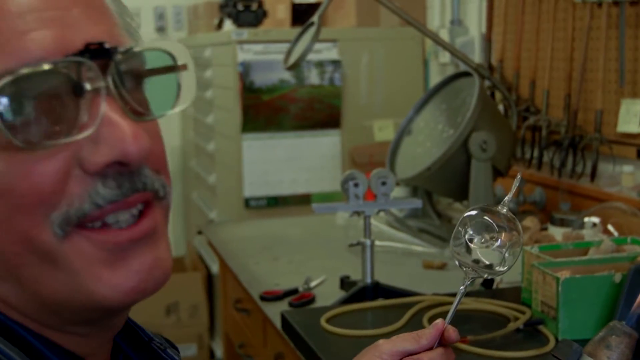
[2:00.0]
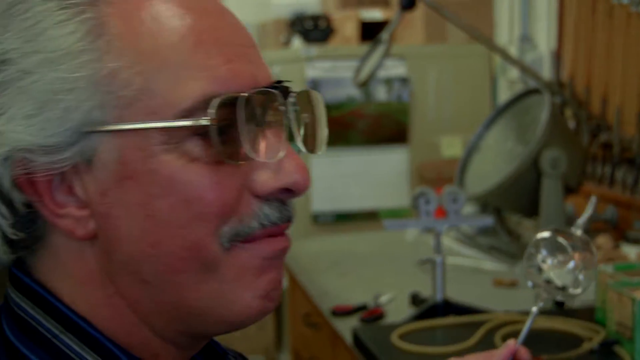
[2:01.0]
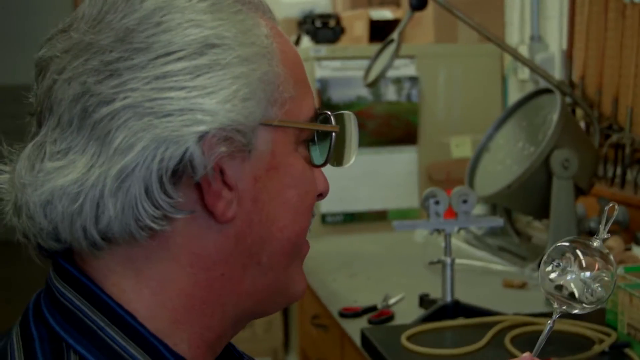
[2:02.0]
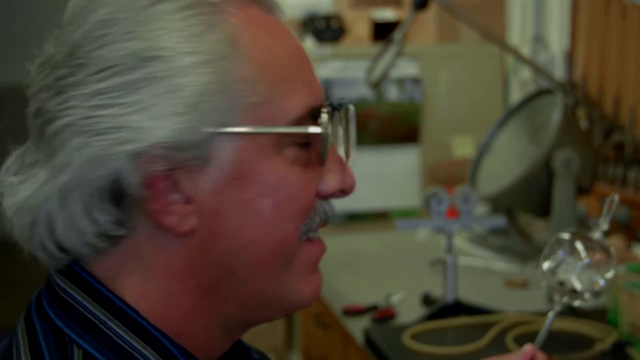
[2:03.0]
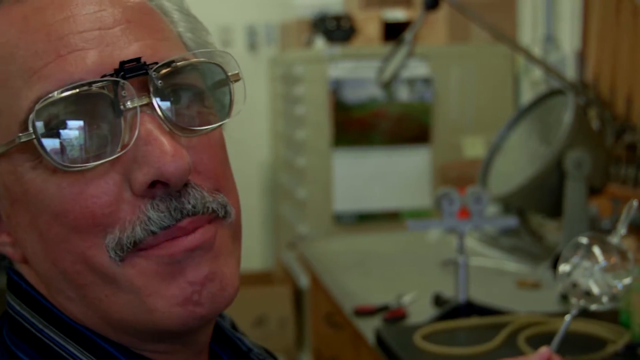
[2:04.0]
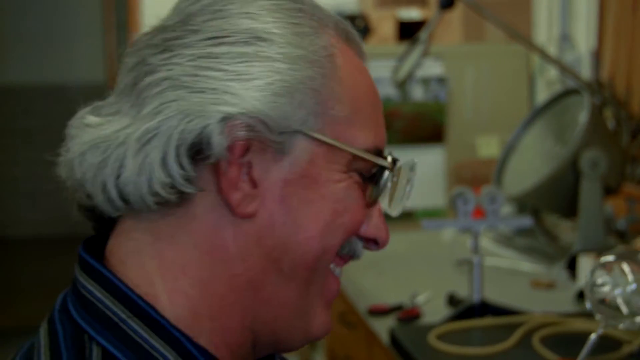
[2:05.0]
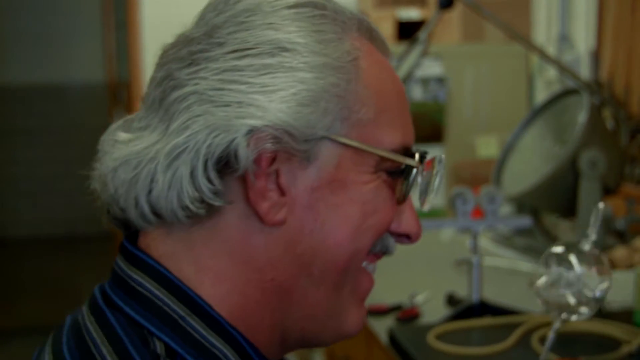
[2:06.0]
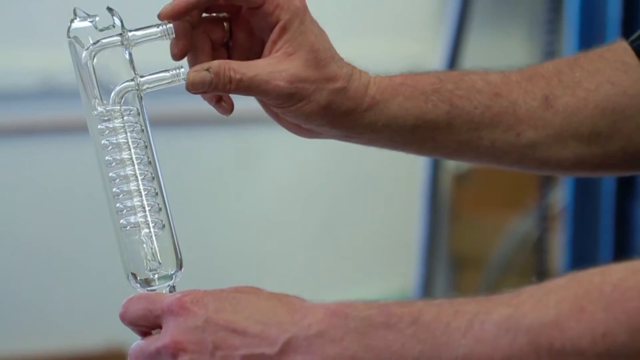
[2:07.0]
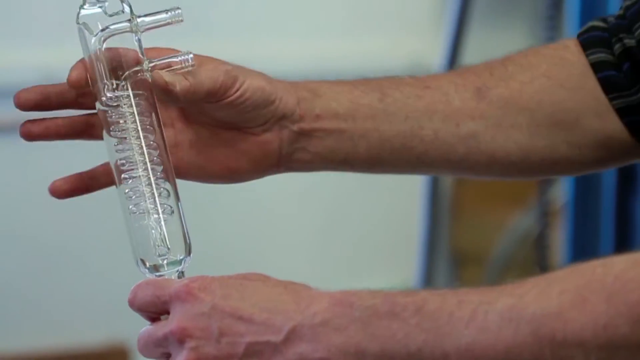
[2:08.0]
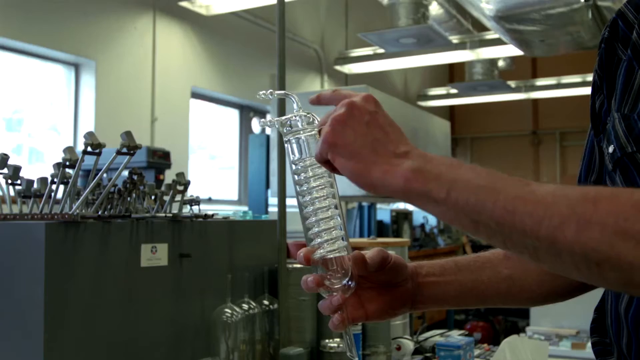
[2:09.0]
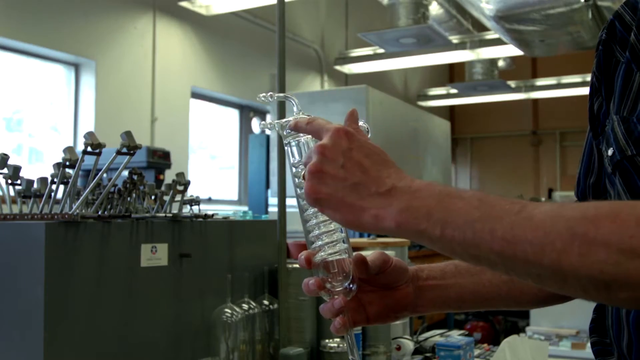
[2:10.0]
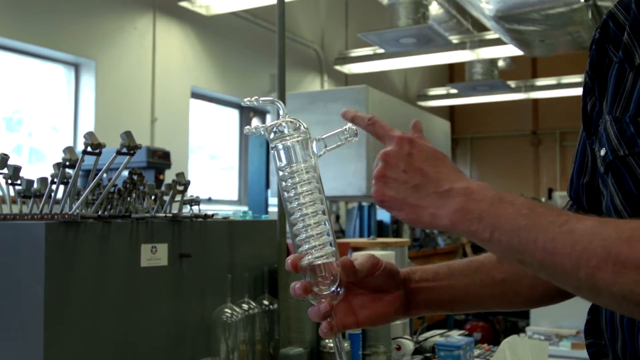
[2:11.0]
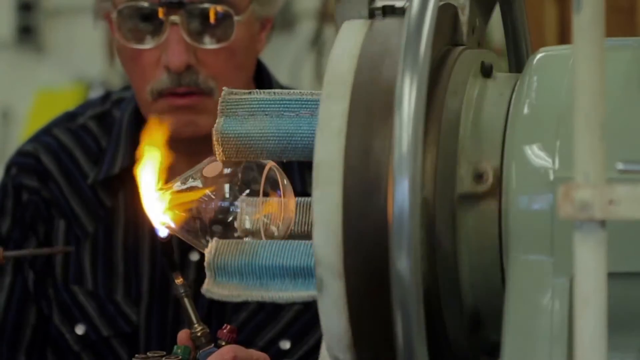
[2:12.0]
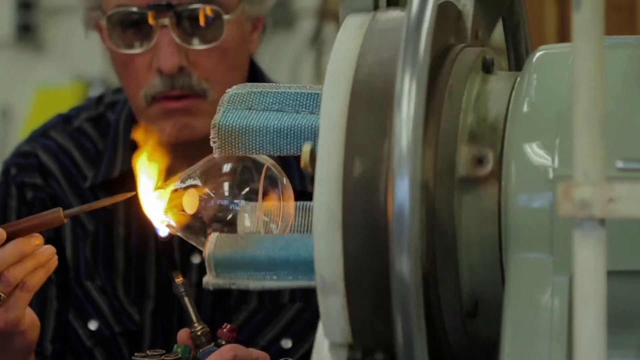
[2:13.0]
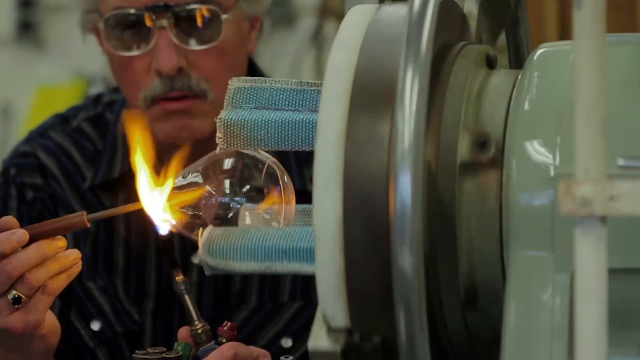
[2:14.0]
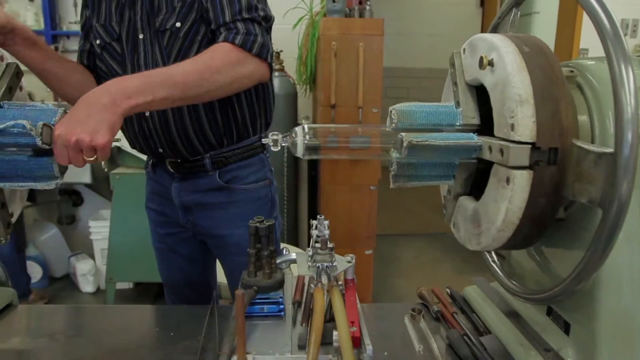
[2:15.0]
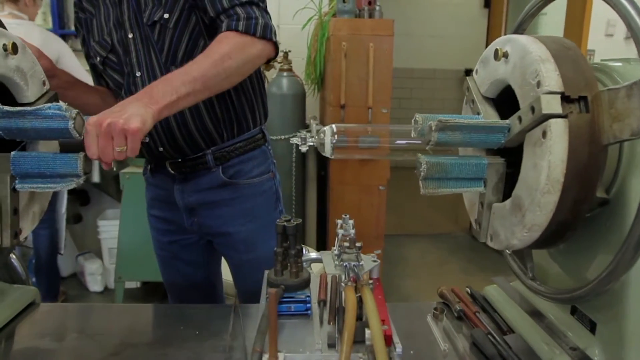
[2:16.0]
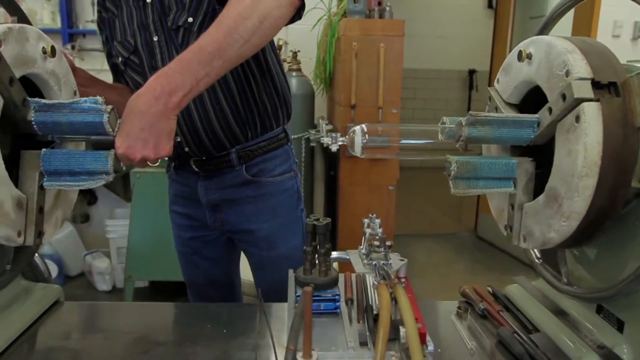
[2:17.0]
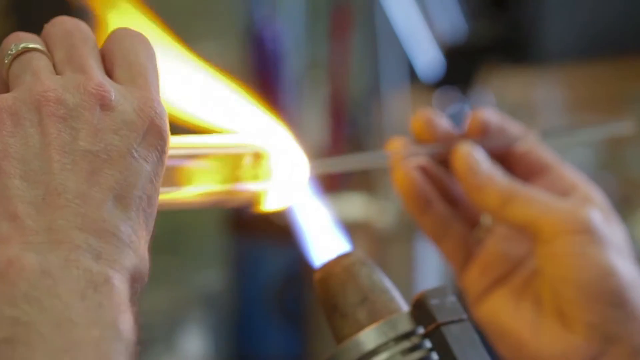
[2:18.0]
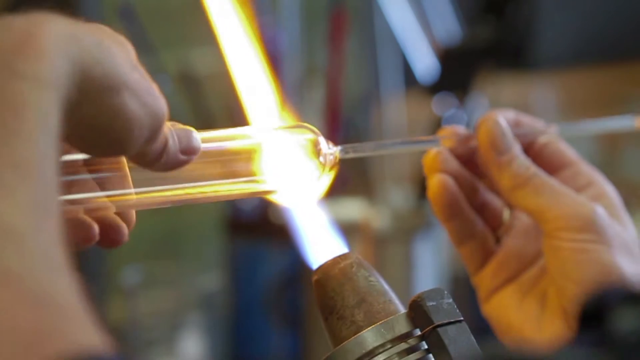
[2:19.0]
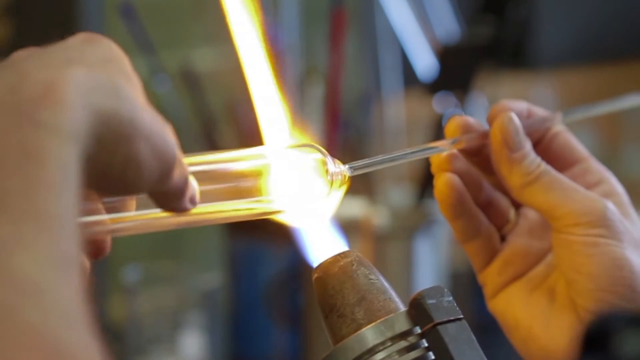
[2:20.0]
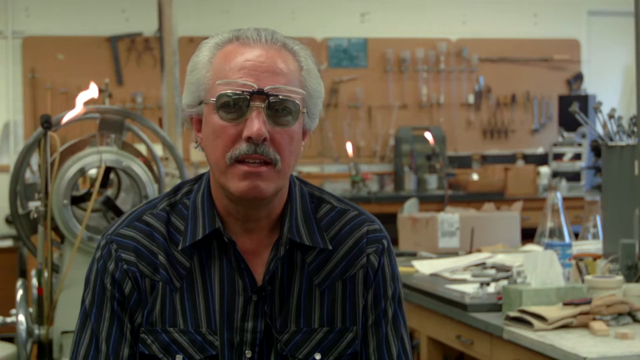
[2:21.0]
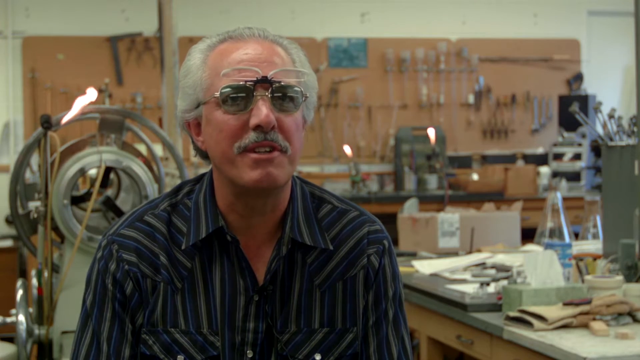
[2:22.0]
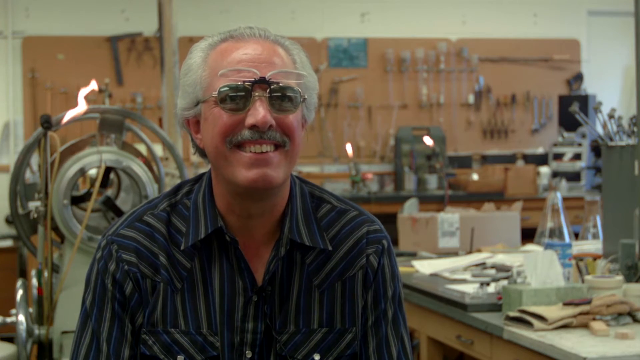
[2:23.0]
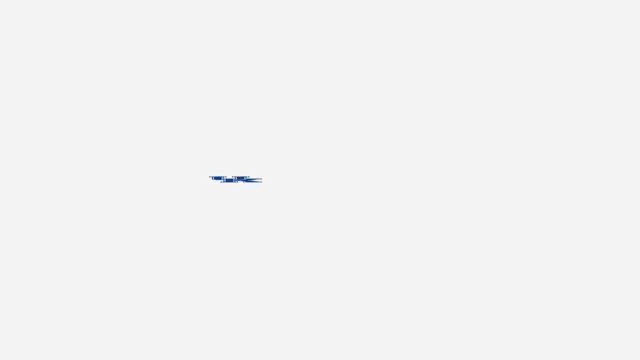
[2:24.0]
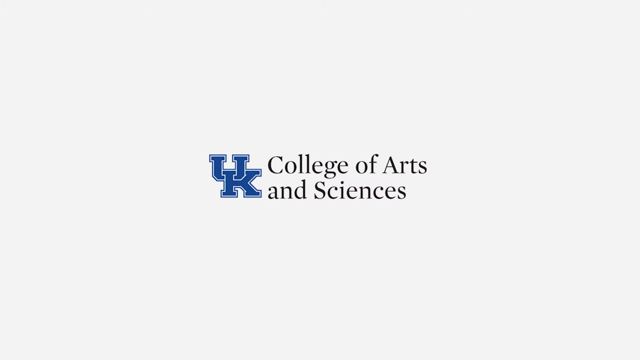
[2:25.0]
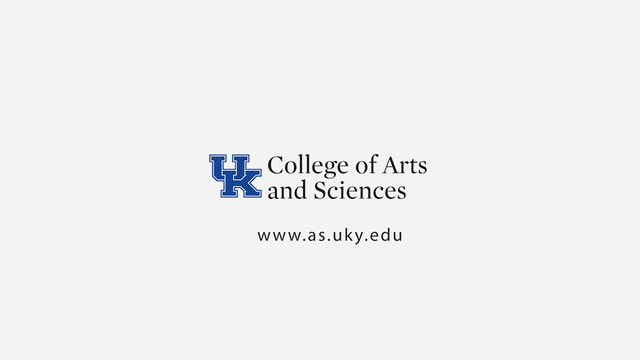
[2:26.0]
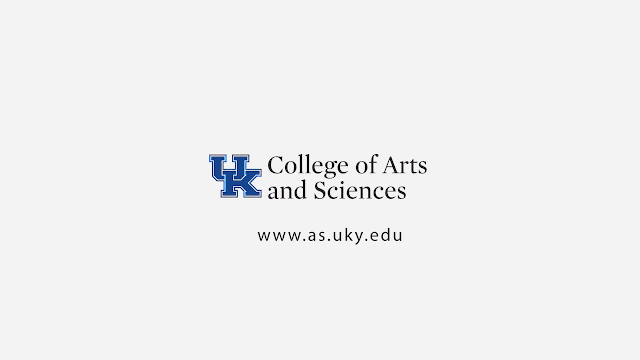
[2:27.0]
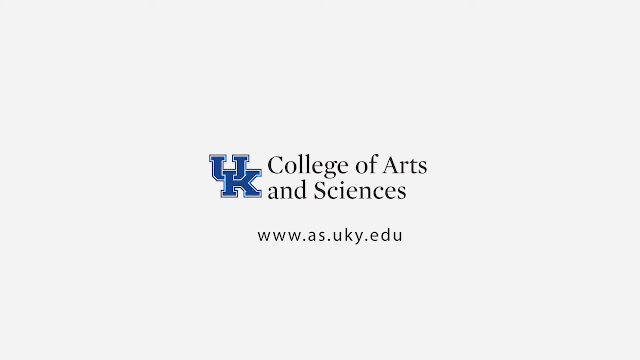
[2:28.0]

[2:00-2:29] Another structure with a spring inside, which he created, is shown. He joins the two machines that spin the glass; the machines have a part with blue, soft, cloth-like things. A close-up shows him moulding another glass and burning it in the fire. He smiles and continues talking. The video ends on a blank screen with the text "UK College of Arts and Sciences", with "UK" in blue and "College of Arts and Sciences" in black, followed by a web page address, "www.as.uky.edu".